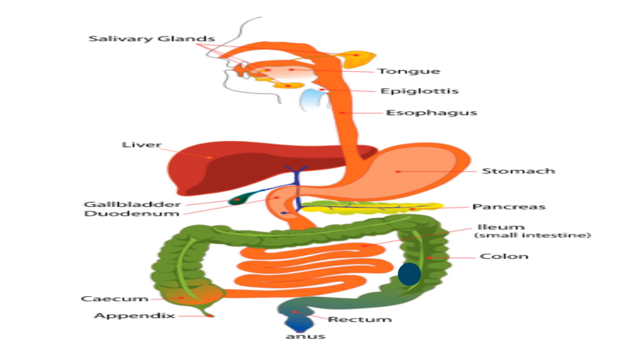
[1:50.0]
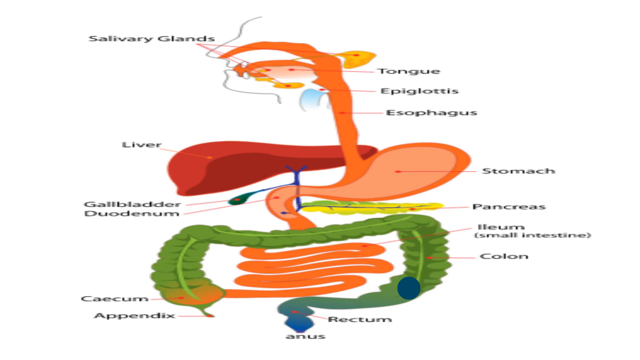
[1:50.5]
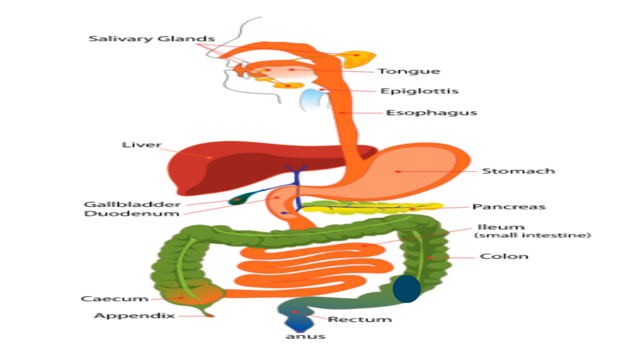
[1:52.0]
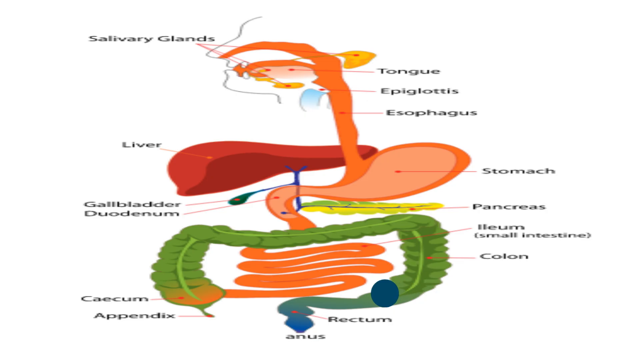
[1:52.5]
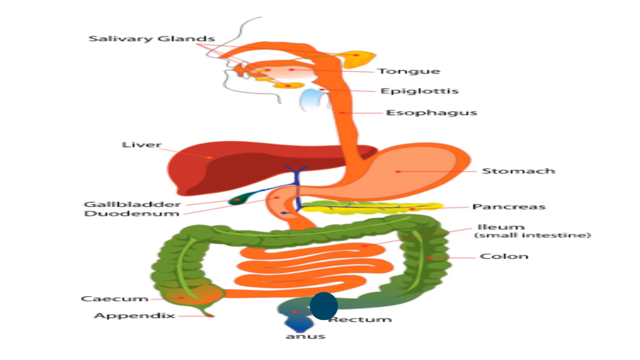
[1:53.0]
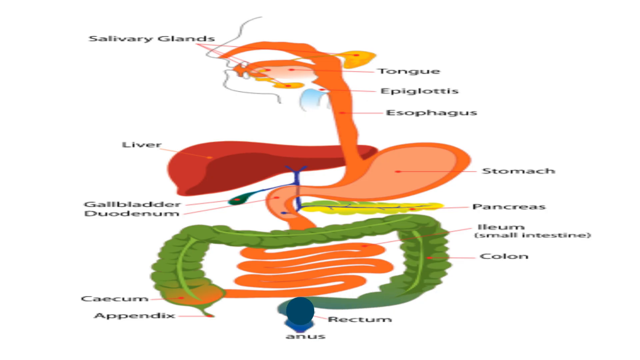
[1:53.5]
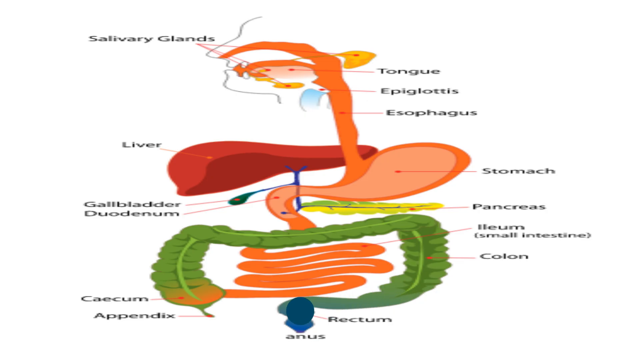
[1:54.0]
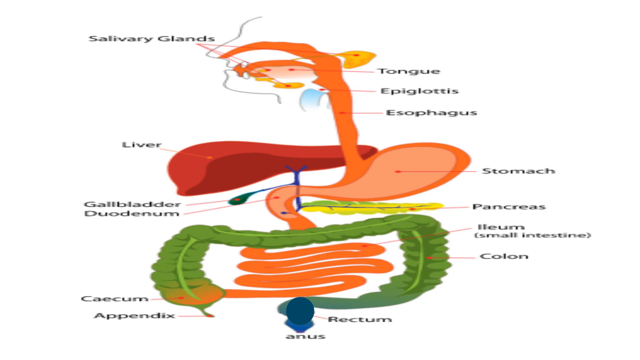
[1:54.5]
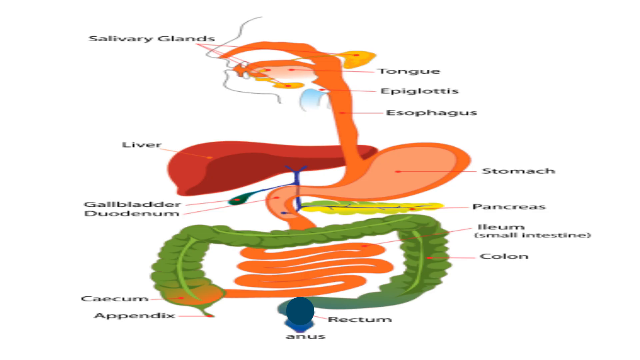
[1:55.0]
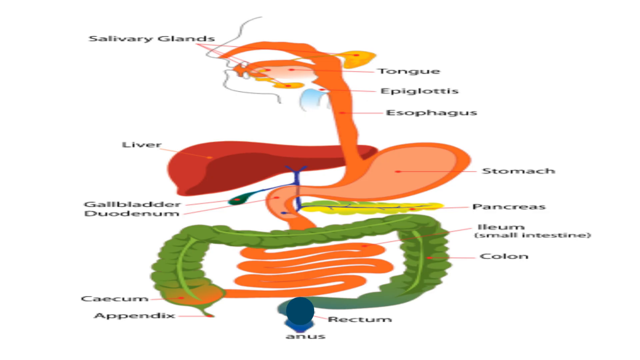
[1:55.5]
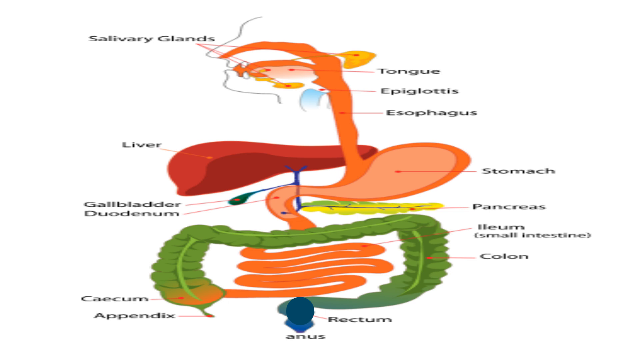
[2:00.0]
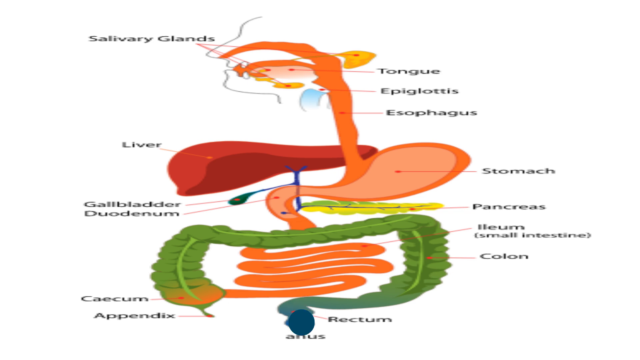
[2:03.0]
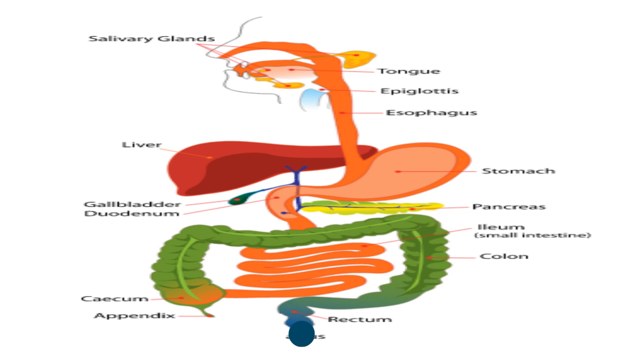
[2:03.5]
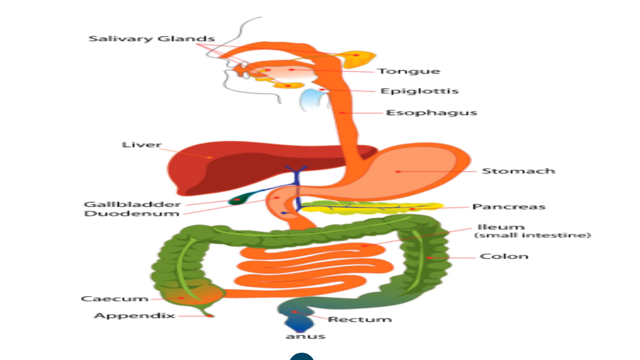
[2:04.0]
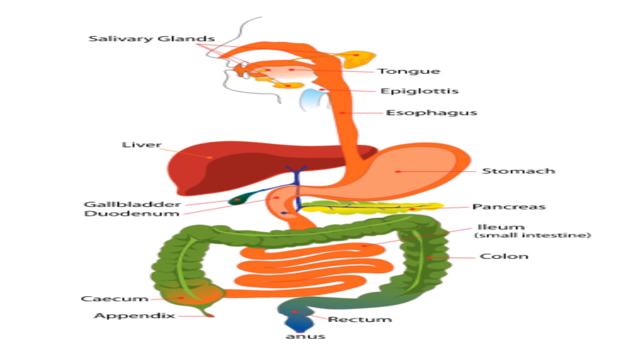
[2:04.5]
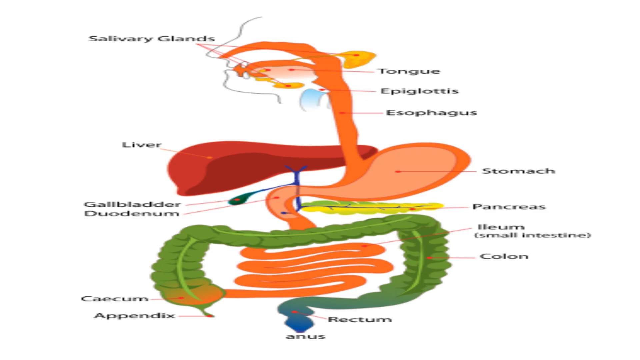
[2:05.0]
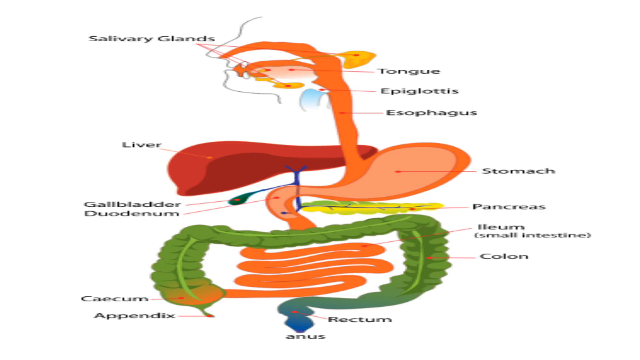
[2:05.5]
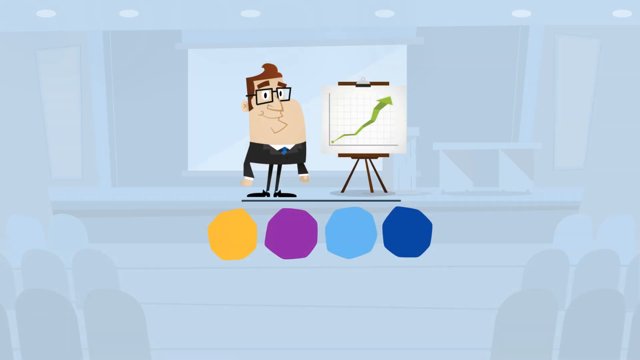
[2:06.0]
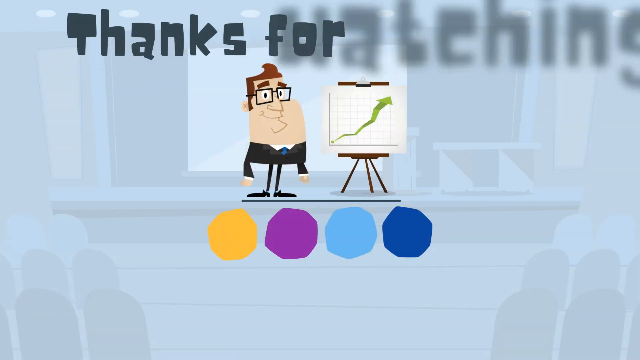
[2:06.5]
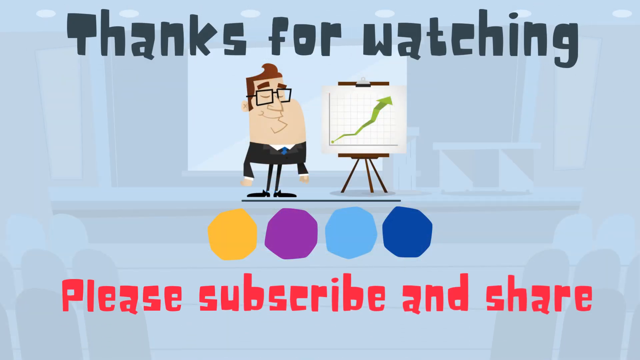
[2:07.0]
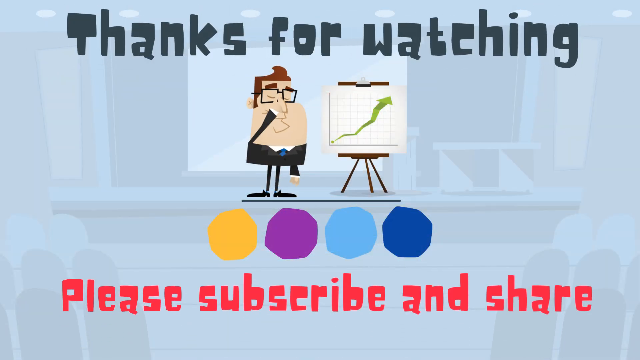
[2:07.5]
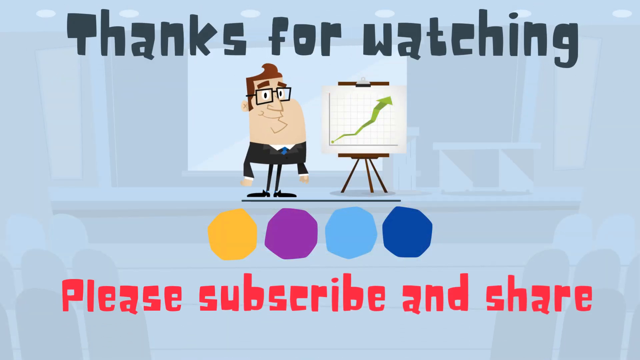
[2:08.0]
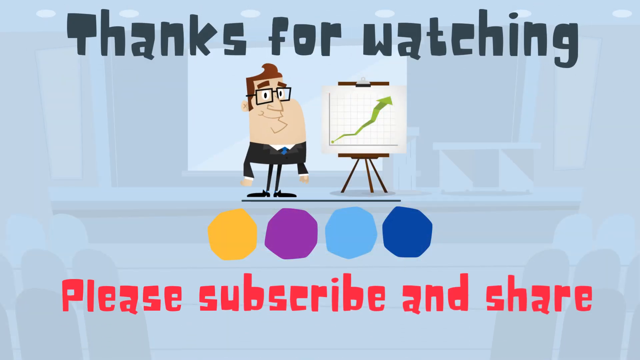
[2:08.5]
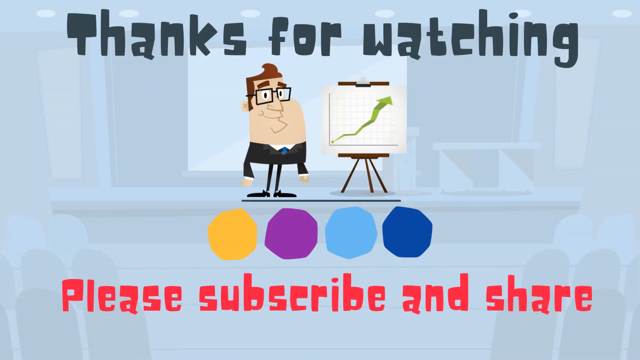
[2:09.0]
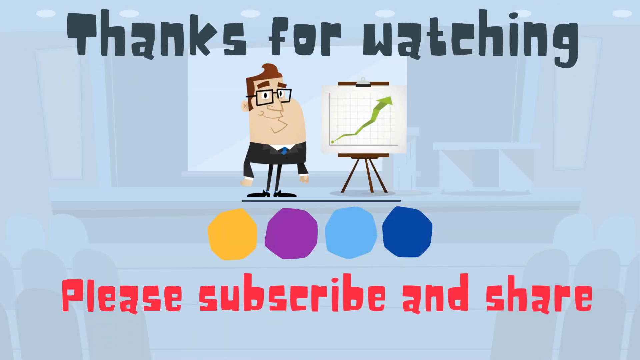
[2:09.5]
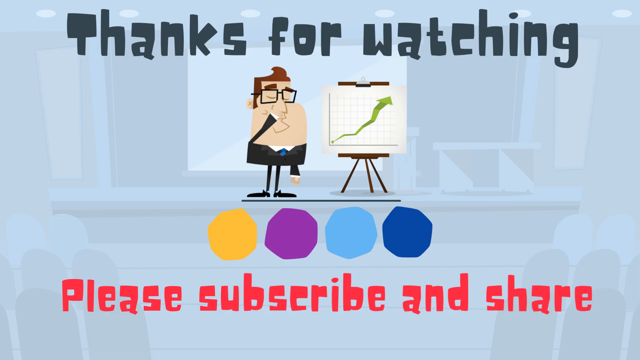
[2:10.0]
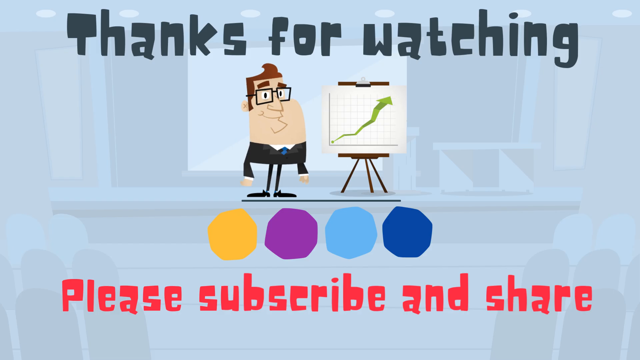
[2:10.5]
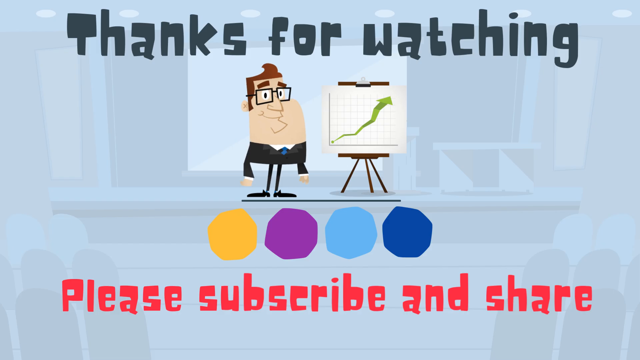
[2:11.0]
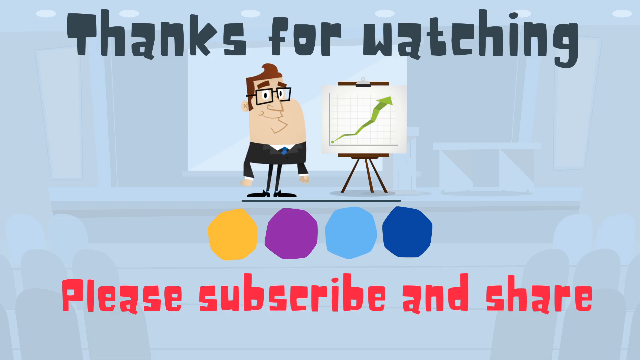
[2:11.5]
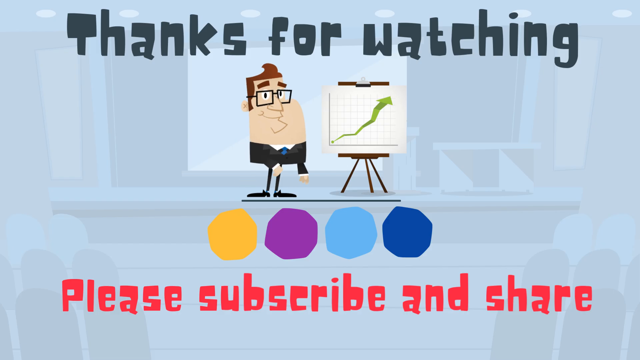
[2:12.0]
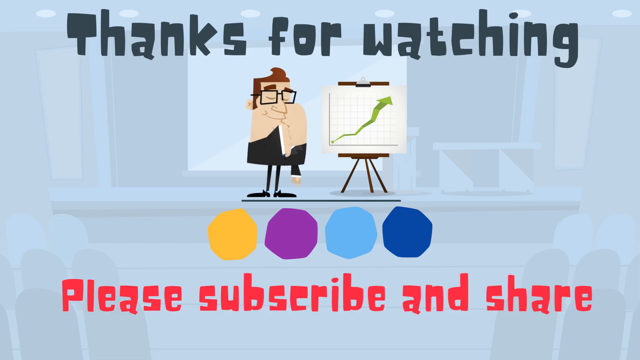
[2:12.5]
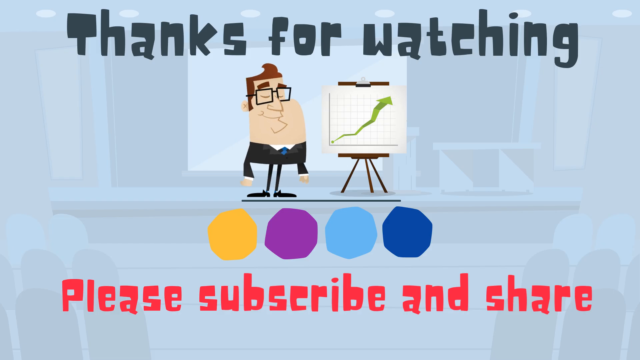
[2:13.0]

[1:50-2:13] A schematic representation of the gastrointestinal tract shows the various organs of the digestive tract in different colors. A circular blue cursor at the bottom of the image moves in the first seconds and then stops exactly in the center of the lower portion of the image. Finally, the cursor moves quite quickly downwards until it leaves the frame. The last image is a rather fluid animation with two pieces of text in the same font, one at the top of the frame in blue and one at the bottom in red. In the center is a stylized, animated man with a stool and a sheet of white paper next to it, with a graphic drawn on it and a green arrow pointing towards the tree at the top right. Below the man are four irregular polygons which, from left to right, are orange, purple, light blue and blue.